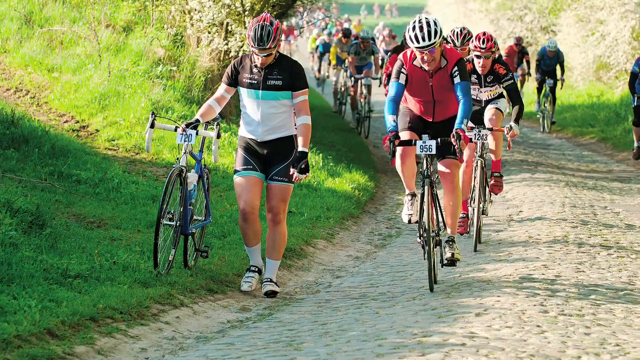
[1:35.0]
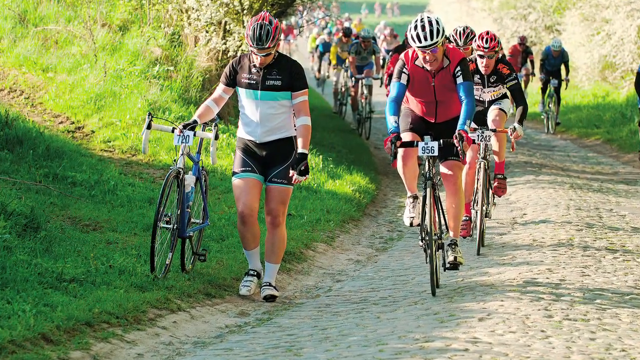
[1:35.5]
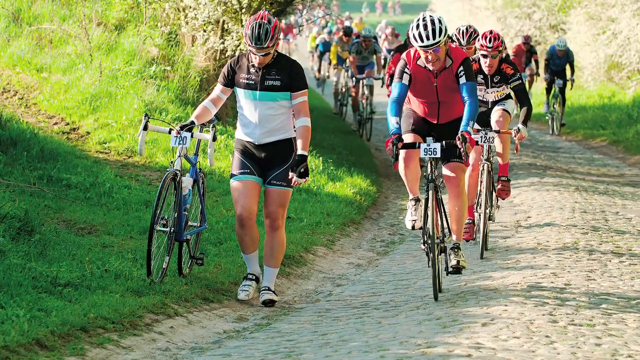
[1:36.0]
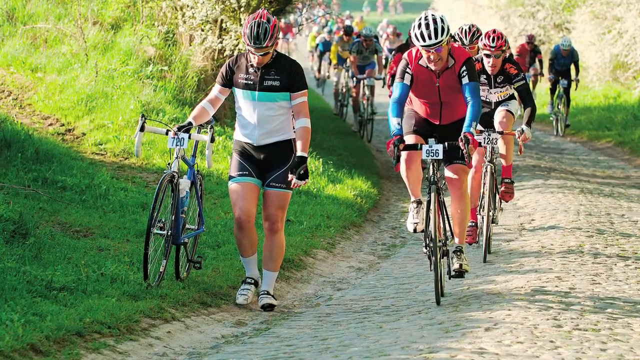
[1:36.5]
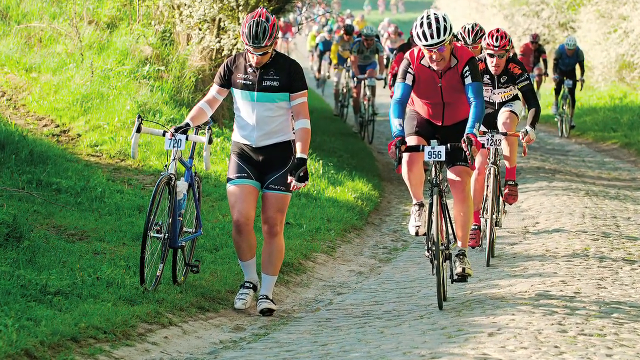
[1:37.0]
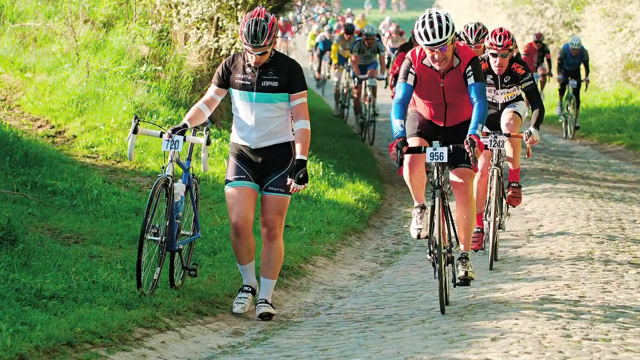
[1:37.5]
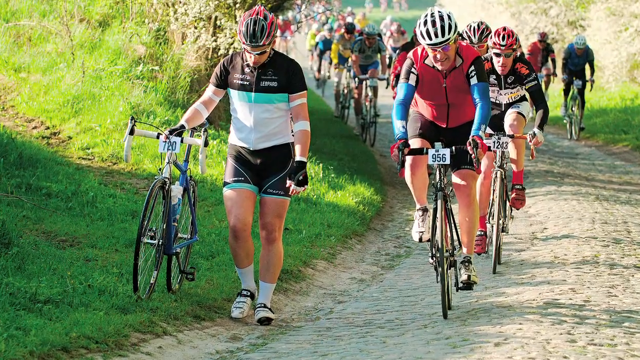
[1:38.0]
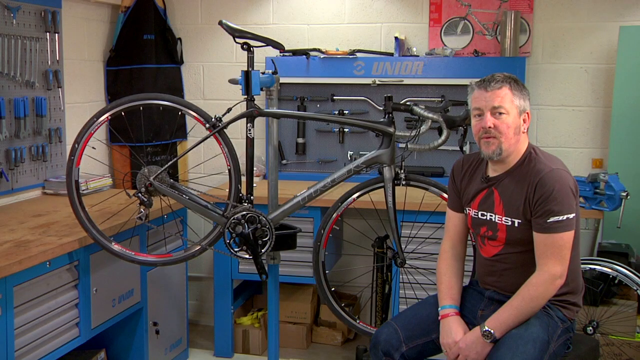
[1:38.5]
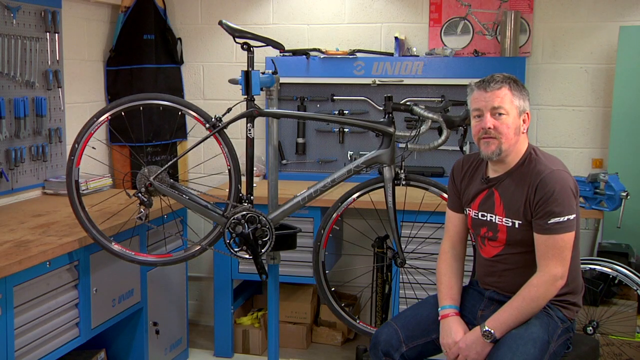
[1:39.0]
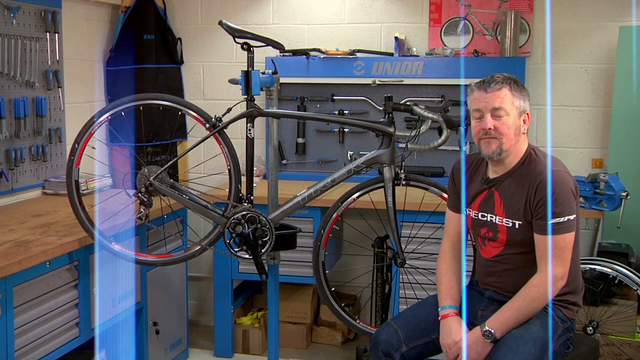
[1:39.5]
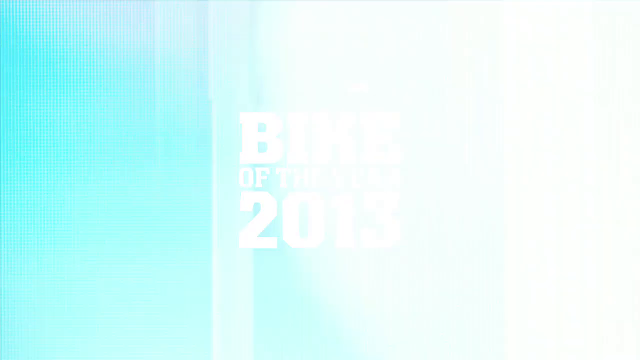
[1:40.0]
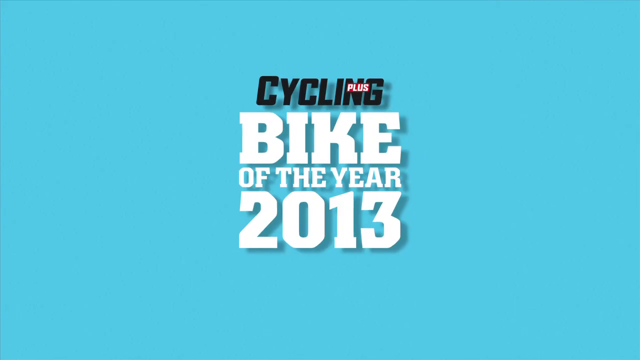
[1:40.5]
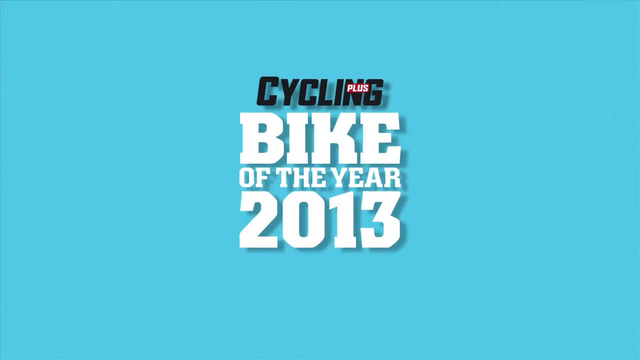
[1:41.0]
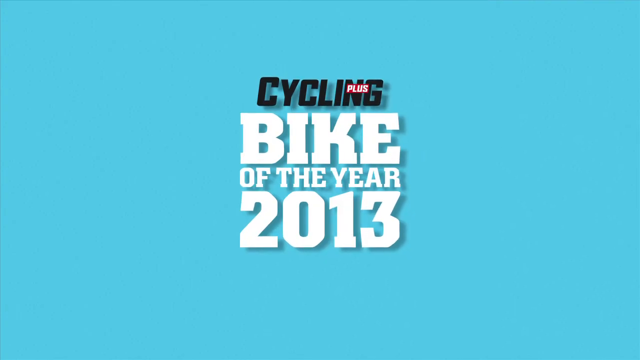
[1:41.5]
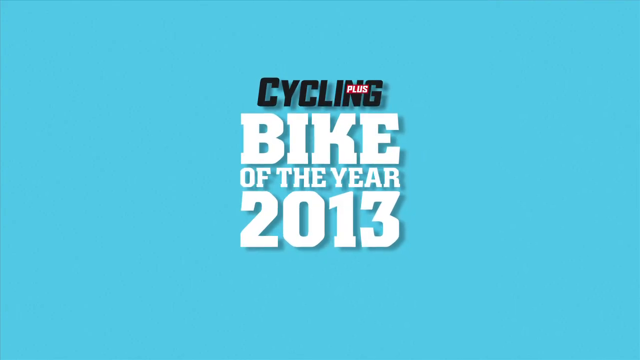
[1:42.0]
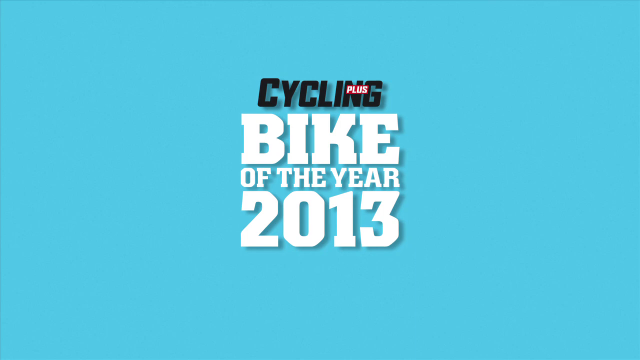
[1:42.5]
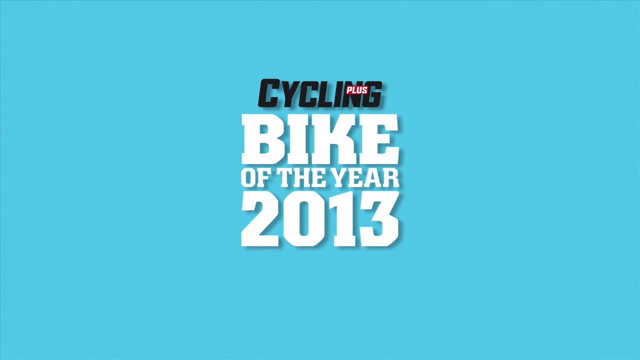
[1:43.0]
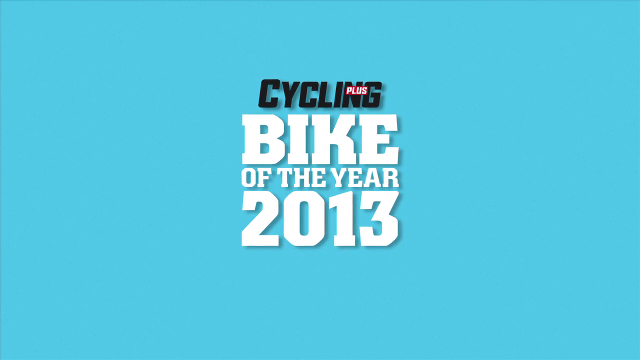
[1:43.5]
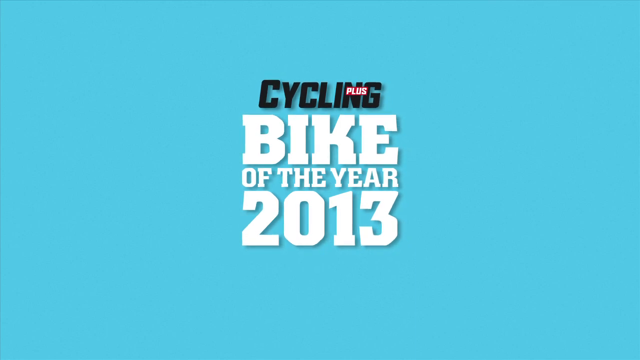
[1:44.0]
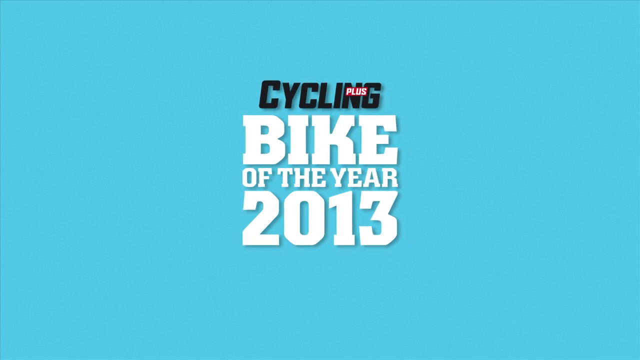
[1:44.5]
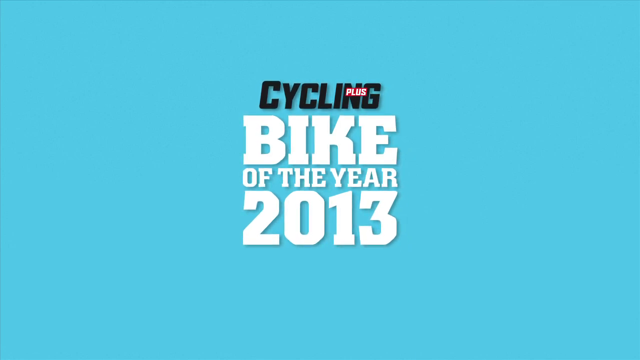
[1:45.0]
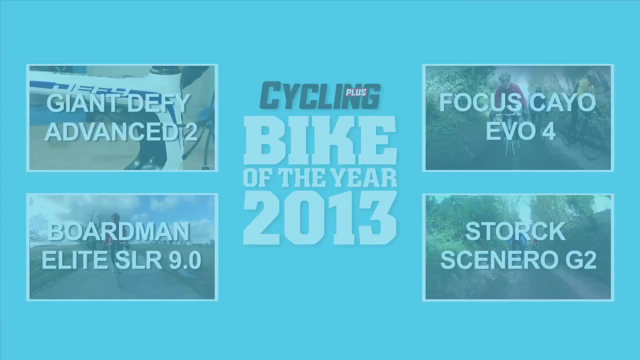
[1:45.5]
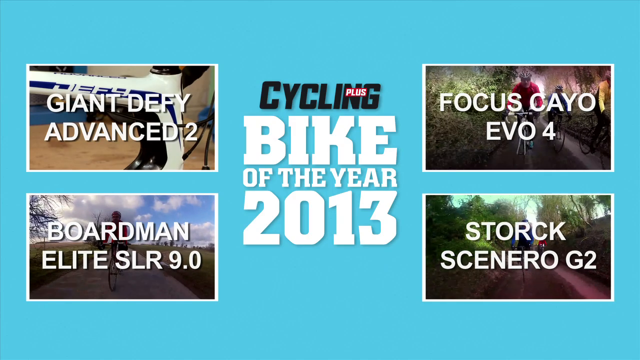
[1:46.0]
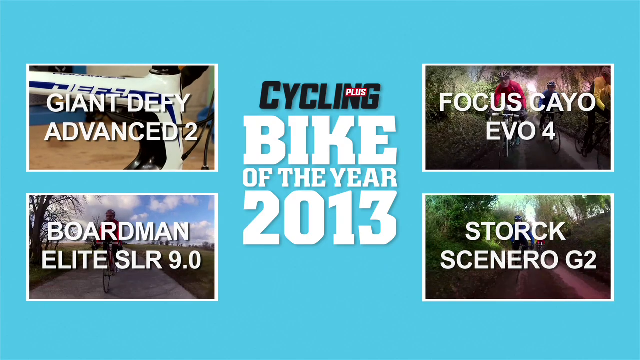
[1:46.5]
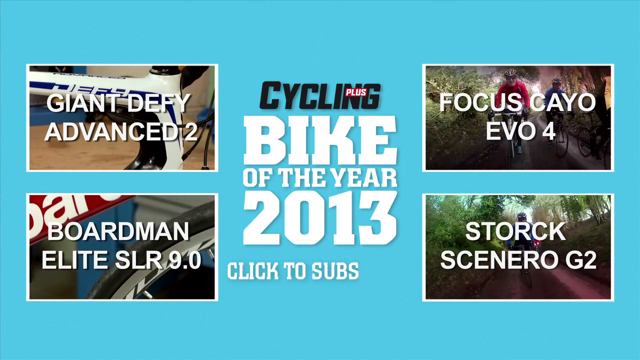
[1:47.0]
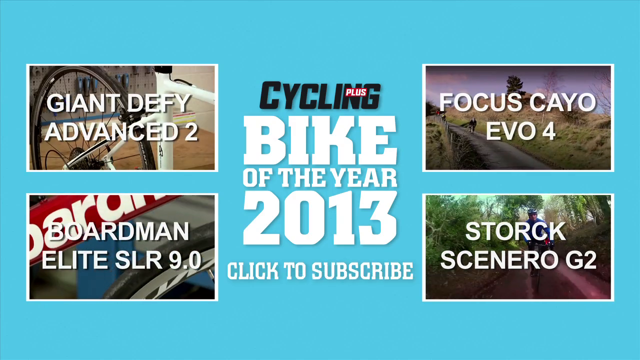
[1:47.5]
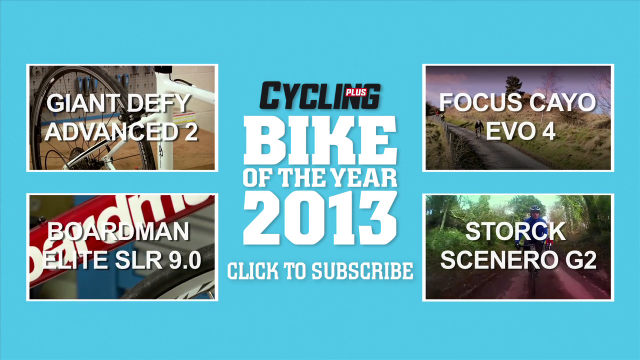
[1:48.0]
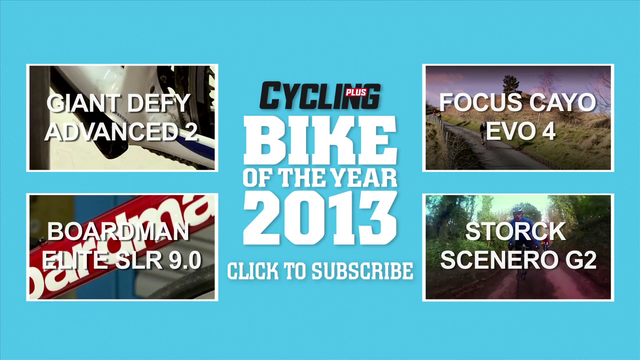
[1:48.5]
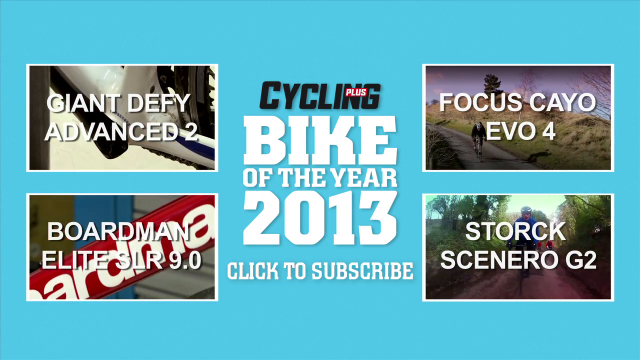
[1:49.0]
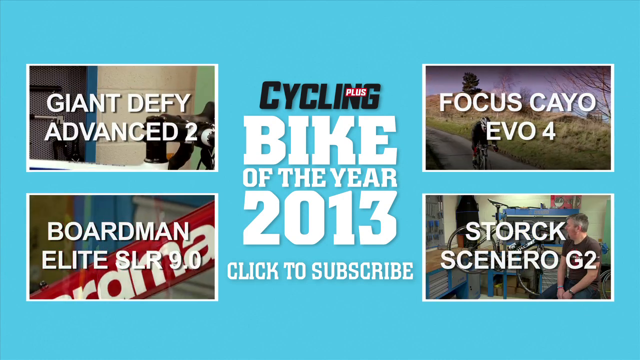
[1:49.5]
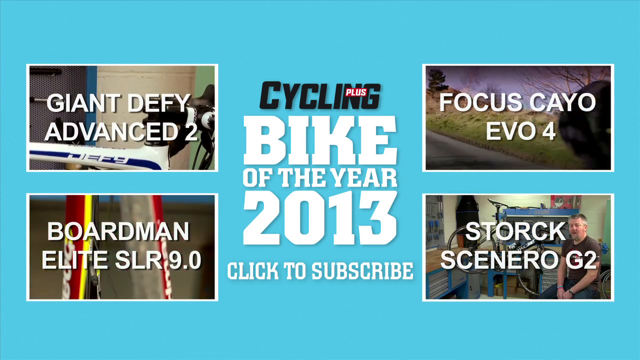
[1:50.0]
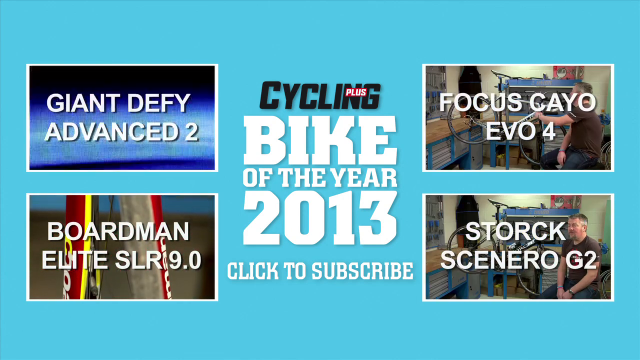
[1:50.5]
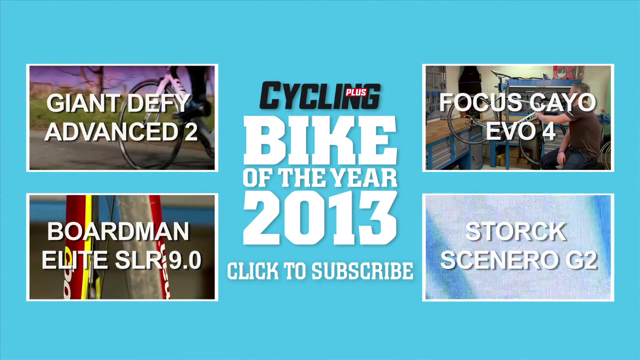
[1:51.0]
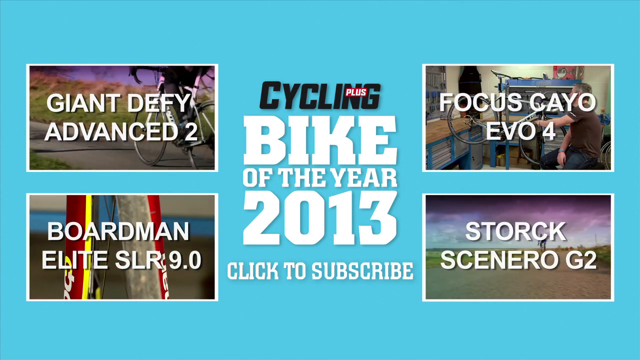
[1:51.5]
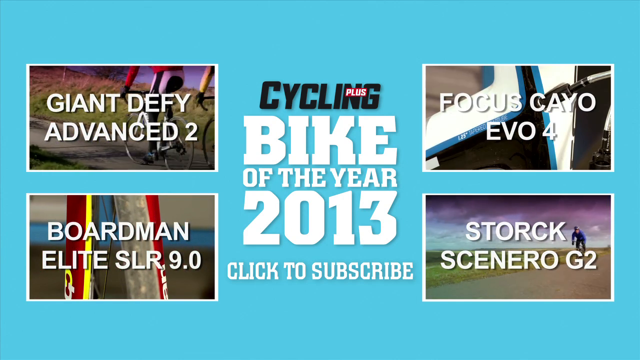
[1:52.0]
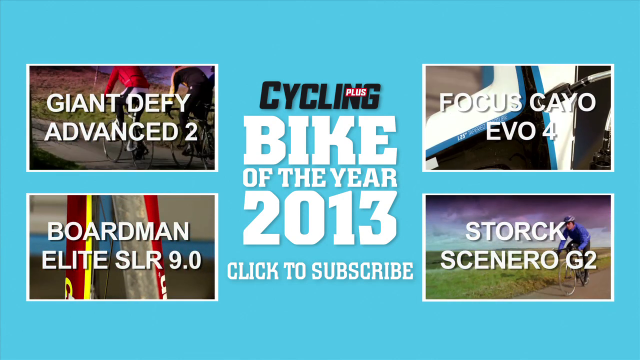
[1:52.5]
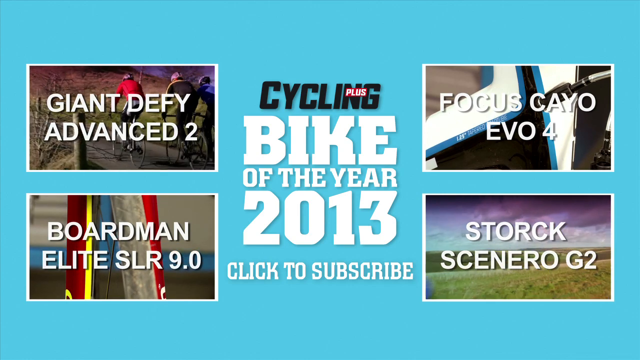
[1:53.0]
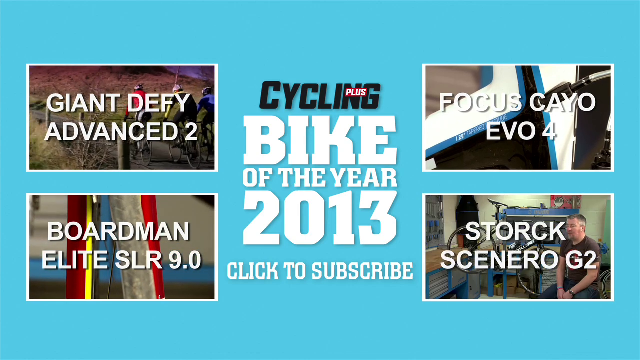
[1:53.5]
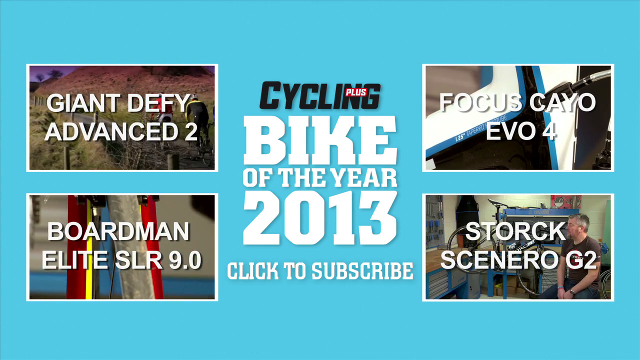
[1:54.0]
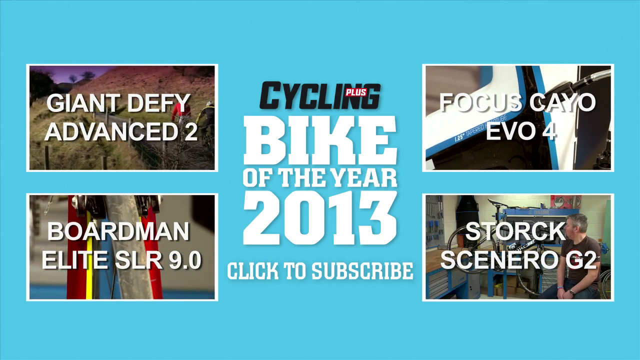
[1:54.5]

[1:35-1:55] A still image shows dozens of people in a bike race; a person on the left side walks a bike, while everyone else is on their bikes wearing helmets and jerseys, with race bibs or numbers on themselves or their bikes. After the still image, the video returns to the gentleman sitting in the workshop with the Trek bike on a stand next to him. He appears to say a few words, and then a closing shot shows Cycling Plus Bike of the Year 2013. What look like short clips linking to other videos appear along with a click to subscribe message: the Giant Defy Advance 2, the Boardman Elite SLR 9.0, the Focus Coyote EVO 4 and the Stork Scenario G2, possibly videos of the same gentleman talking.